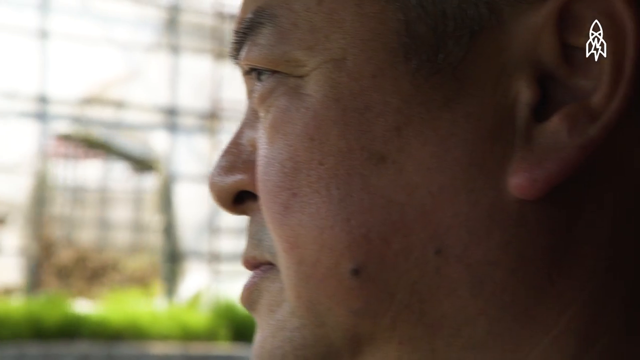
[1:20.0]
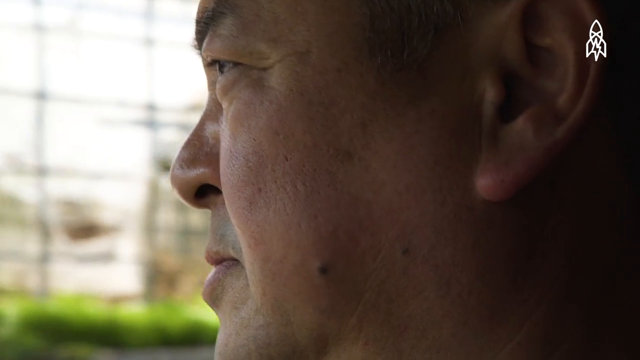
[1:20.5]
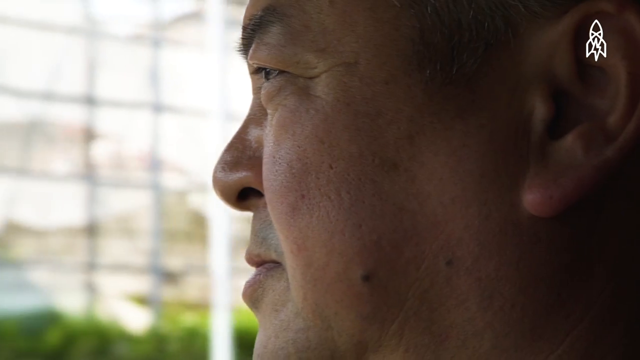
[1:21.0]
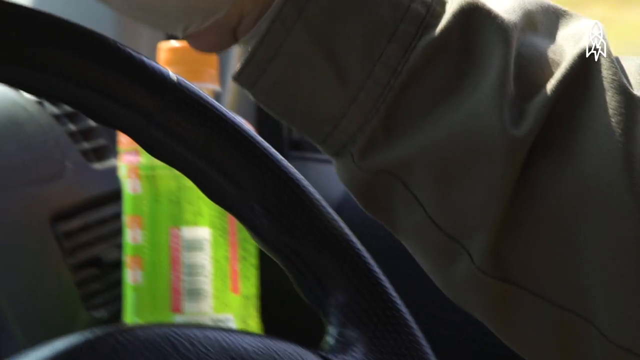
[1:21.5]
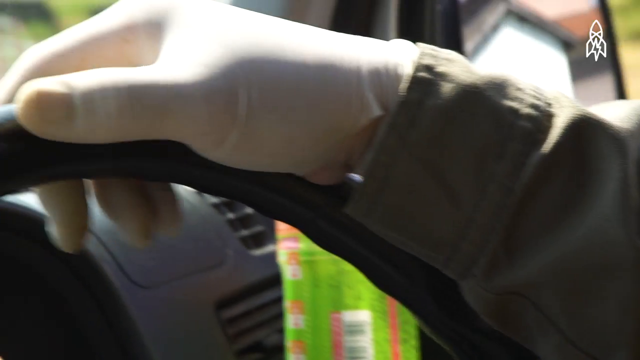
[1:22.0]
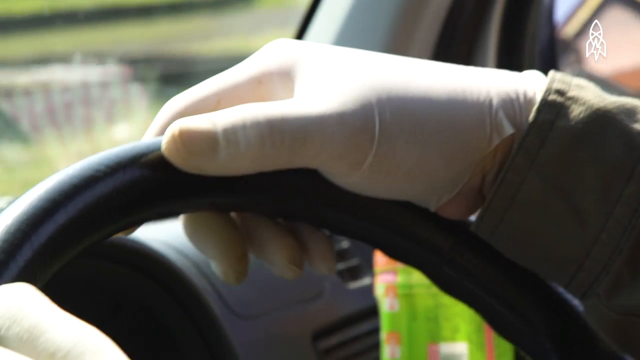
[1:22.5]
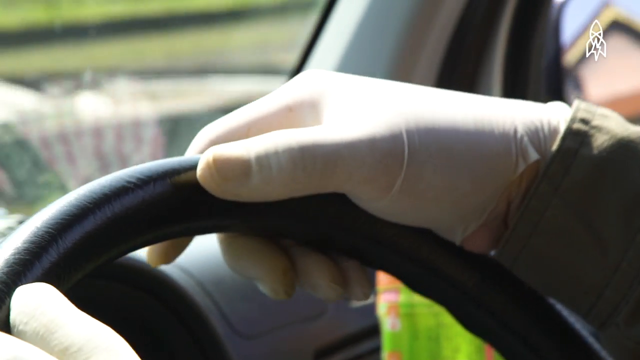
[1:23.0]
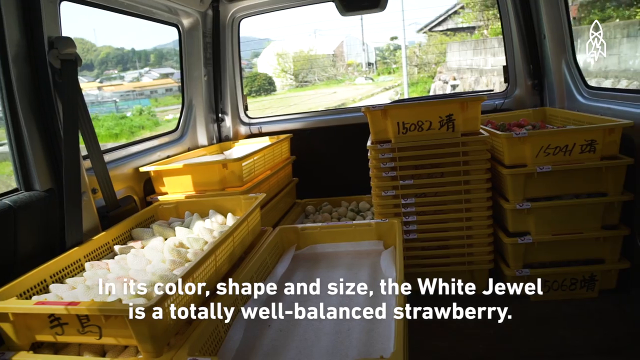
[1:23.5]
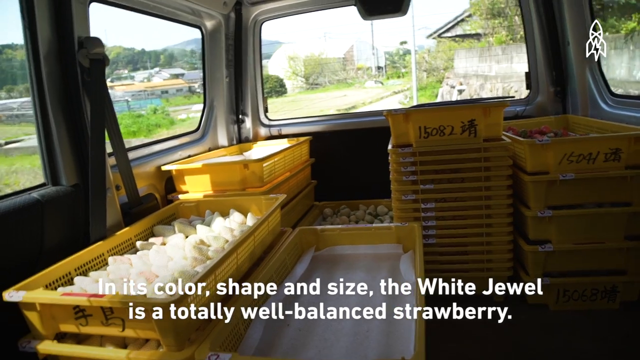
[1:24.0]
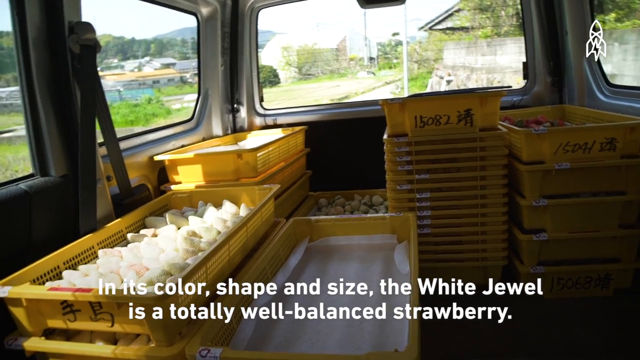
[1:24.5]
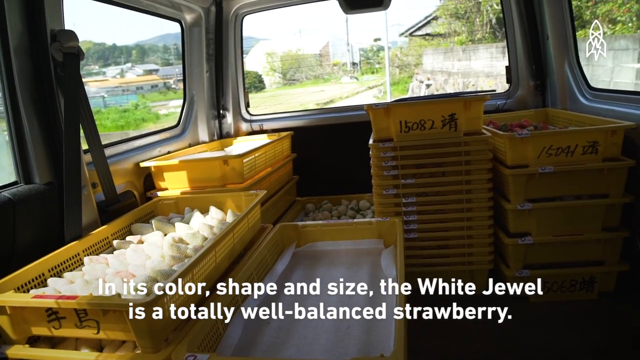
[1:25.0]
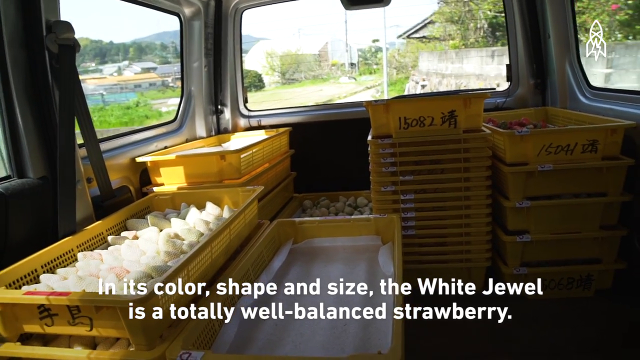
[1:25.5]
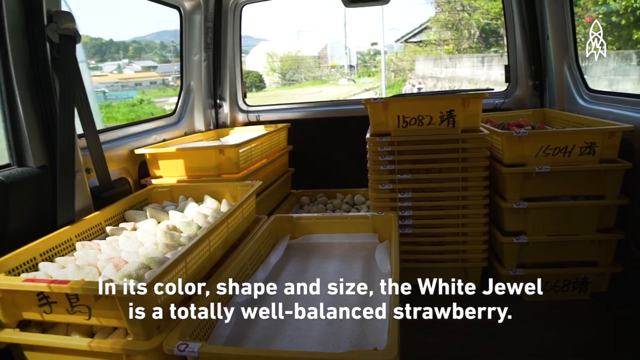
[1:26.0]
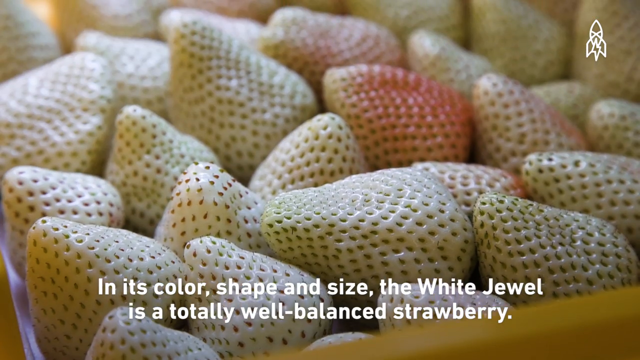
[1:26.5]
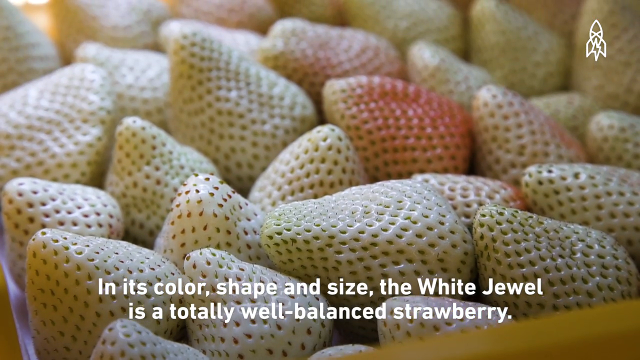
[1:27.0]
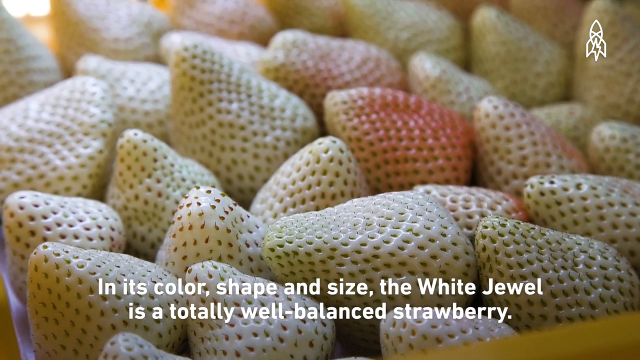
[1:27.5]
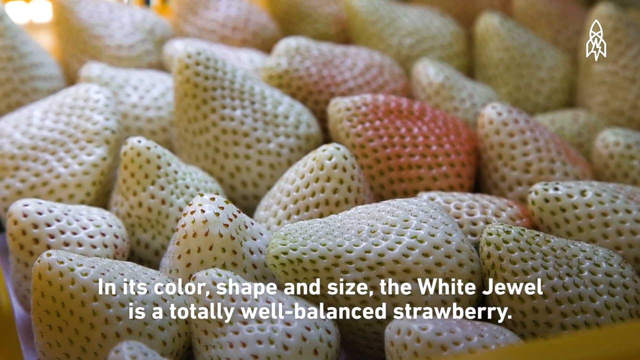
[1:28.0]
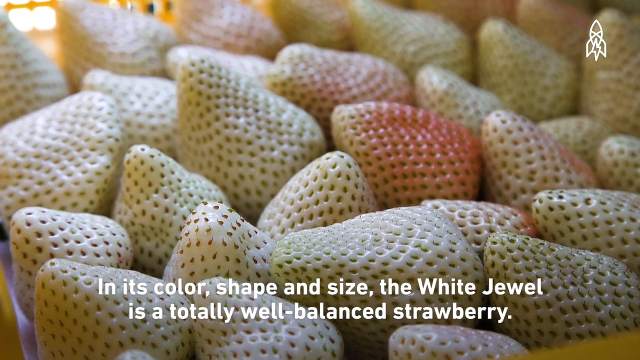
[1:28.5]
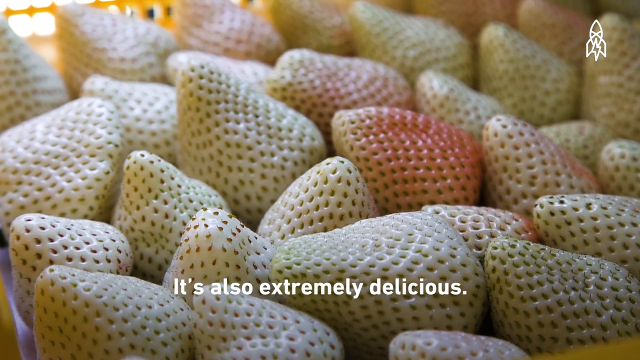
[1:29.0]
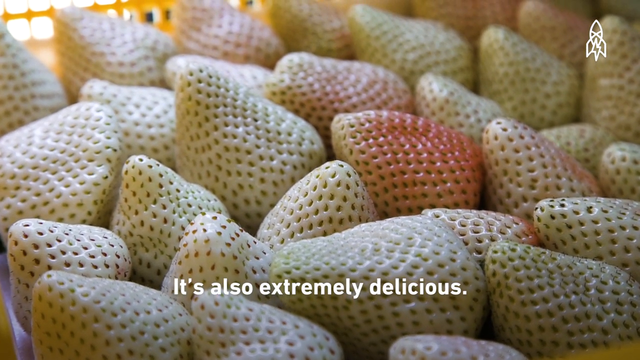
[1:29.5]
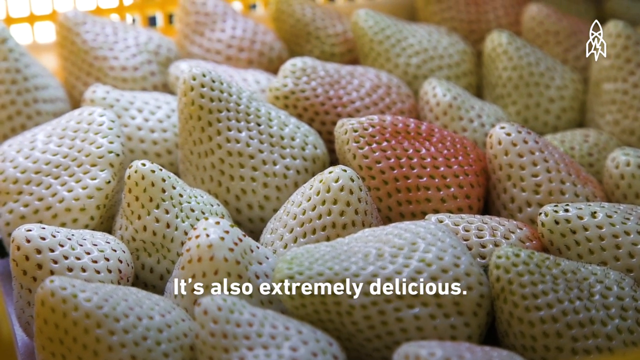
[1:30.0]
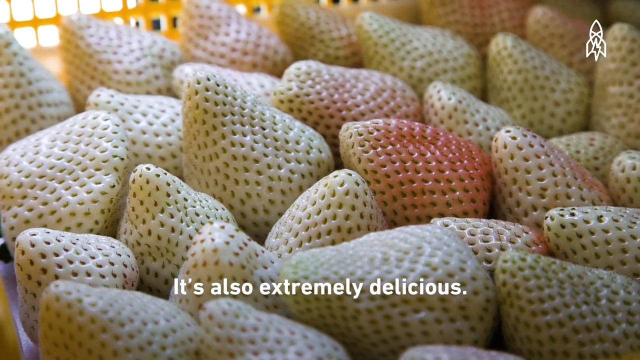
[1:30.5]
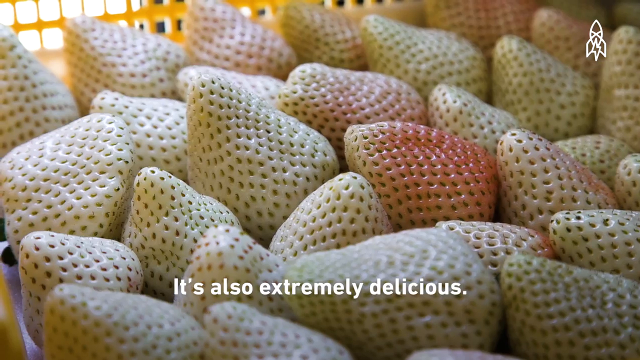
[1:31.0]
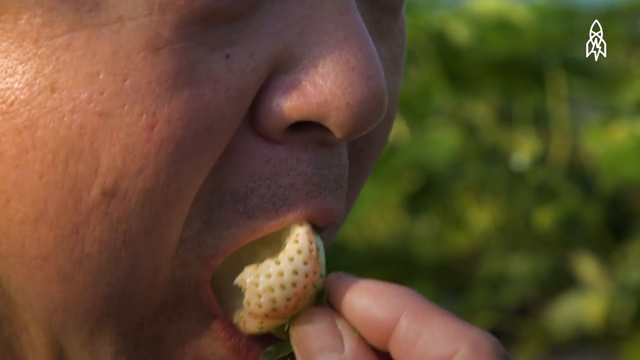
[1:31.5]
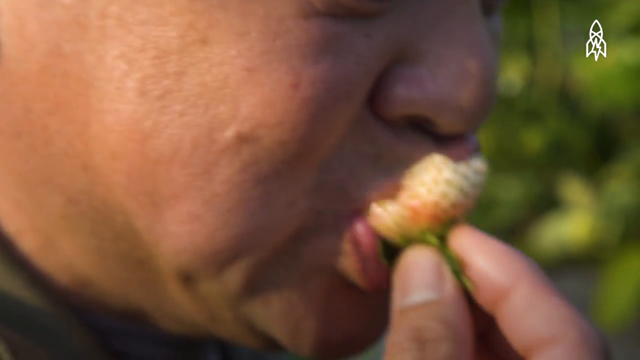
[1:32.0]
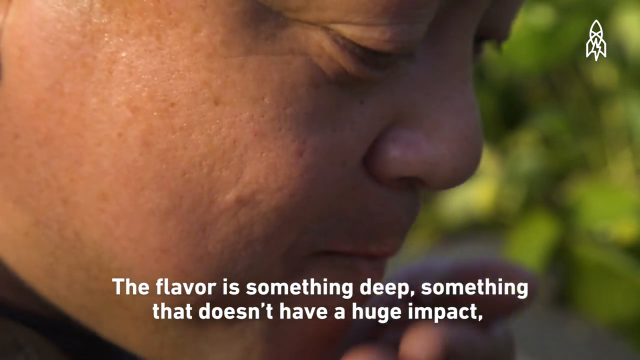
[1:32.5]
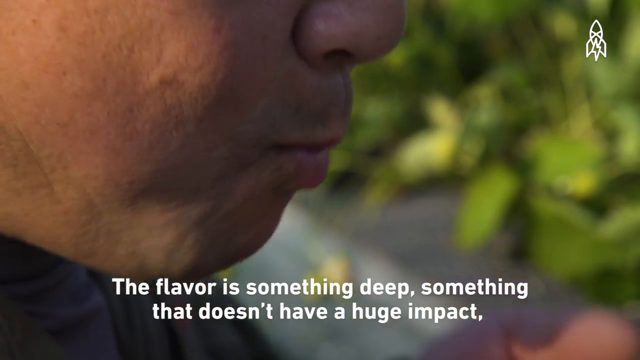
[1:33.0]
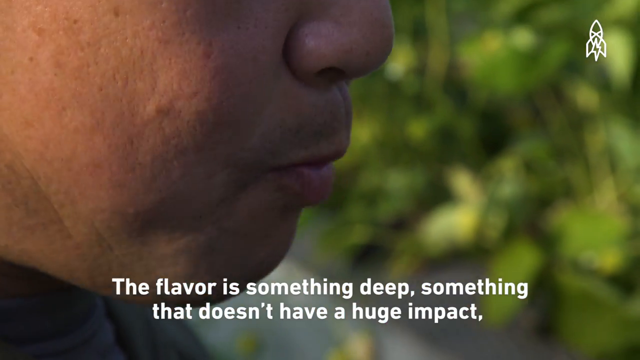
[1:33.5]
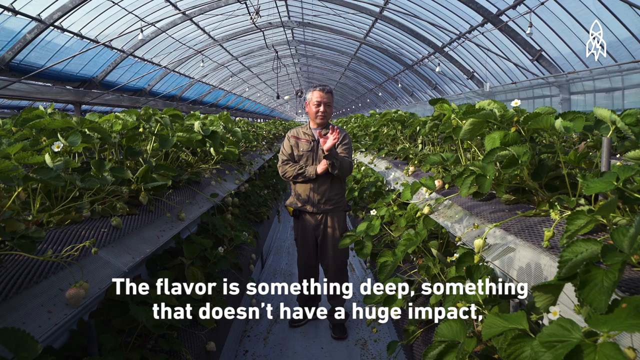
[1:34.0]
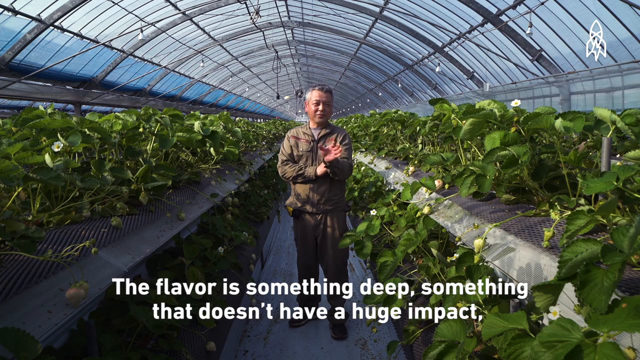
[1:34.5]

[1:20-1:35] Mr. Tashima drives his truck. A montage shows various shots of large bins of white strawberries in the back of the hatchback or pickup truck, where there are many yellow bins; he is presumably on the way to market. There are also close-up shots of Mr. Tashima eating a white jewel strawberry.